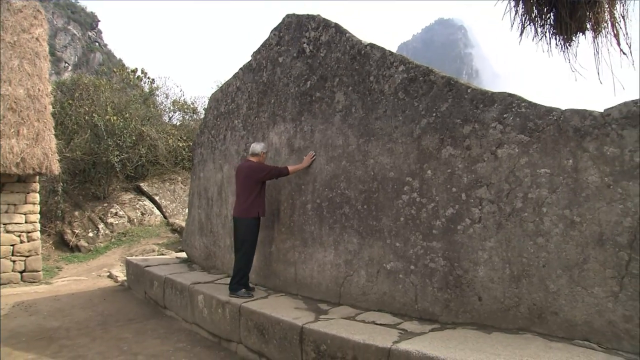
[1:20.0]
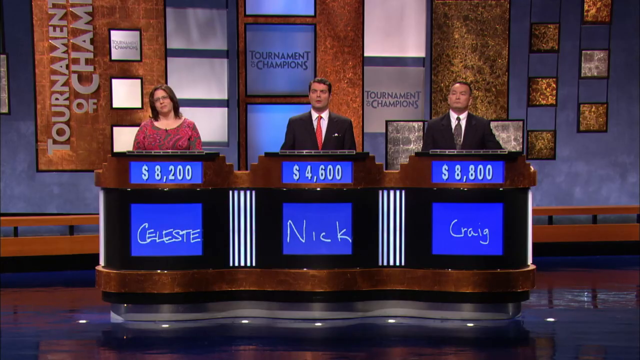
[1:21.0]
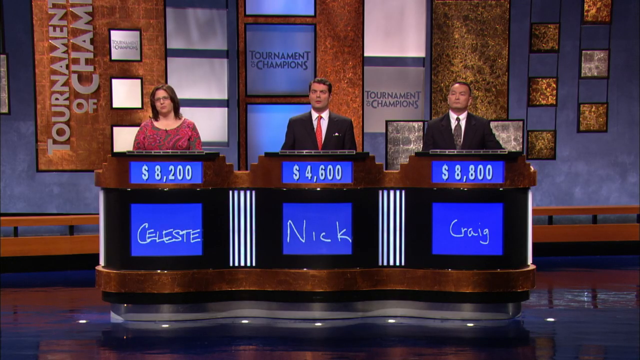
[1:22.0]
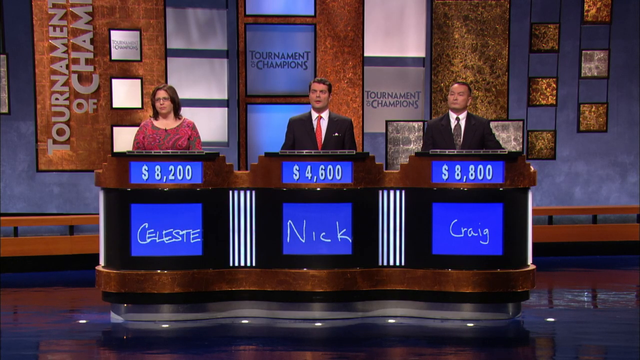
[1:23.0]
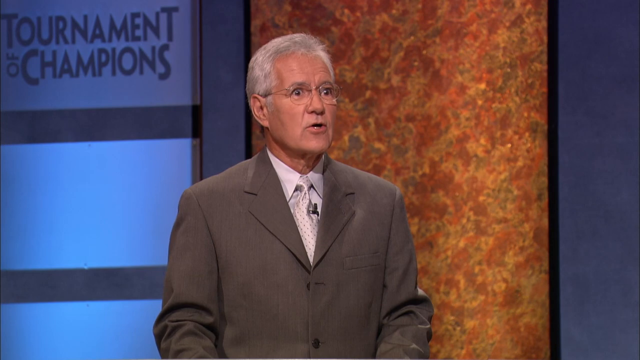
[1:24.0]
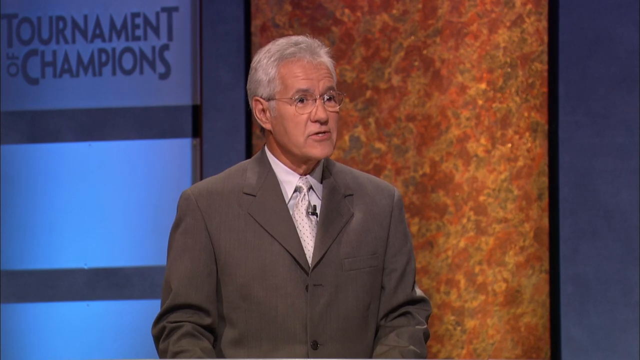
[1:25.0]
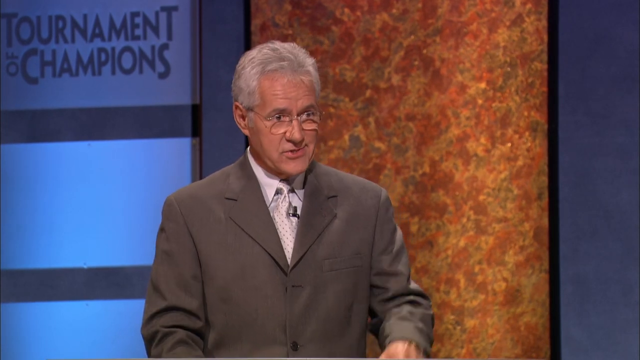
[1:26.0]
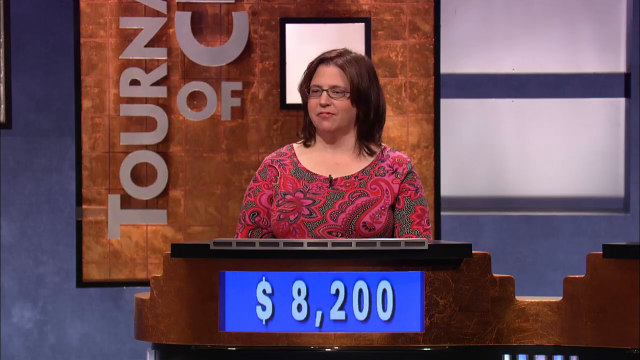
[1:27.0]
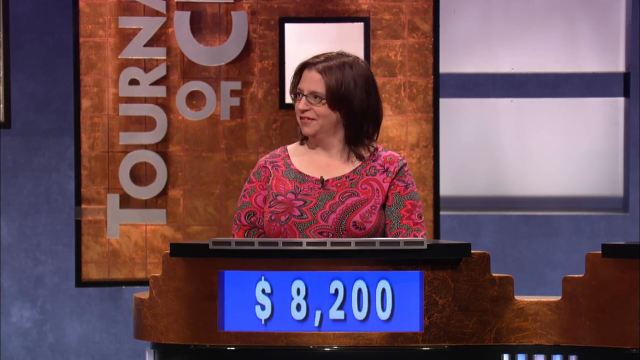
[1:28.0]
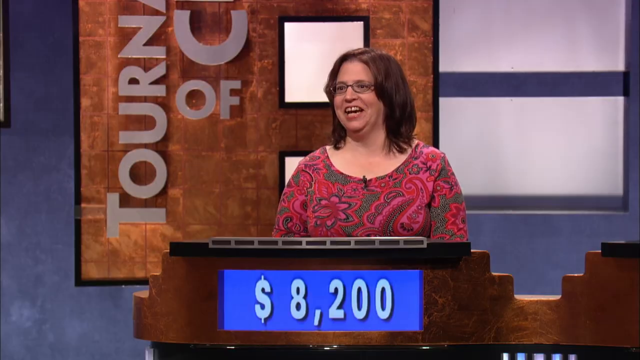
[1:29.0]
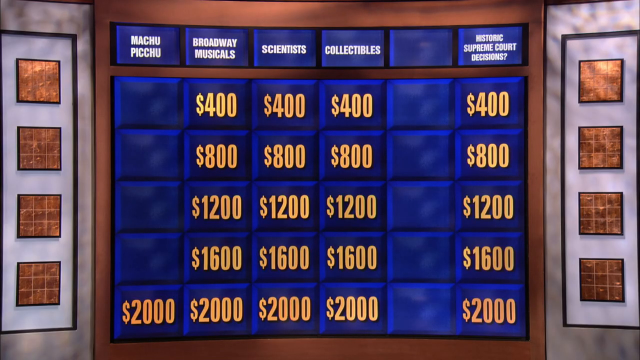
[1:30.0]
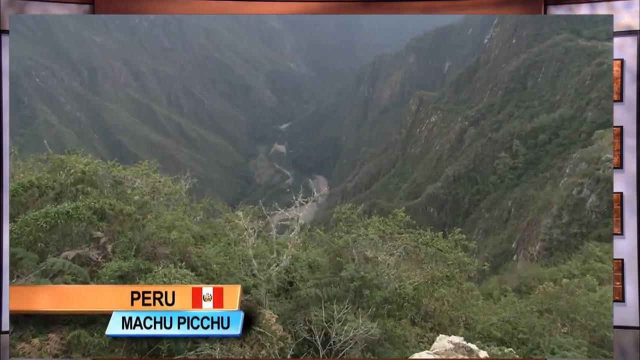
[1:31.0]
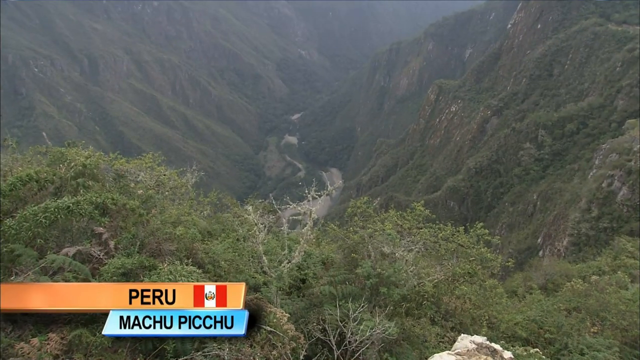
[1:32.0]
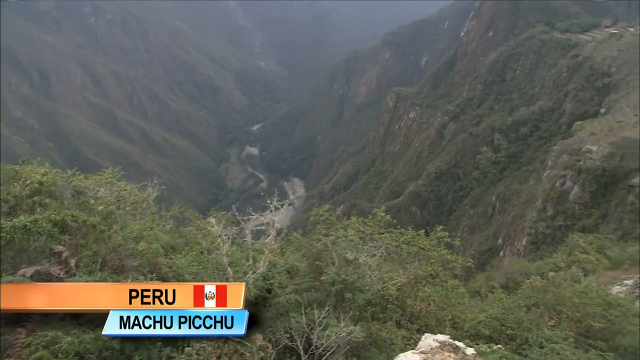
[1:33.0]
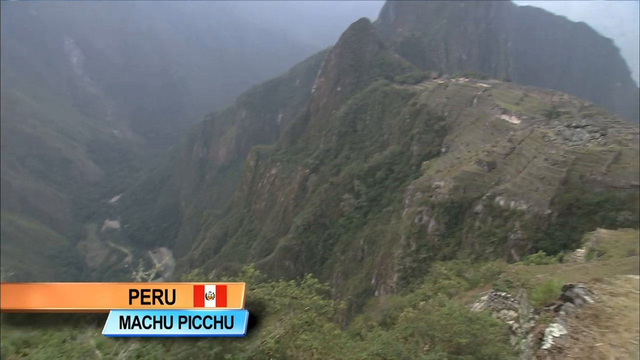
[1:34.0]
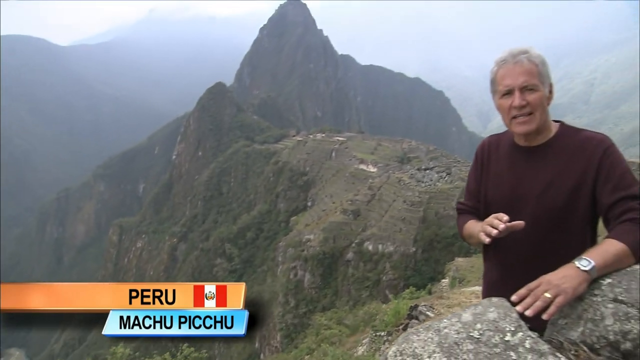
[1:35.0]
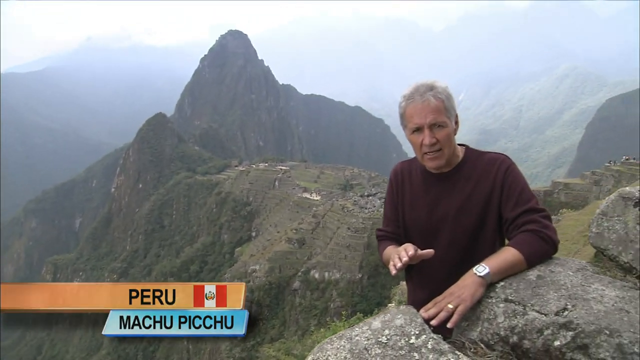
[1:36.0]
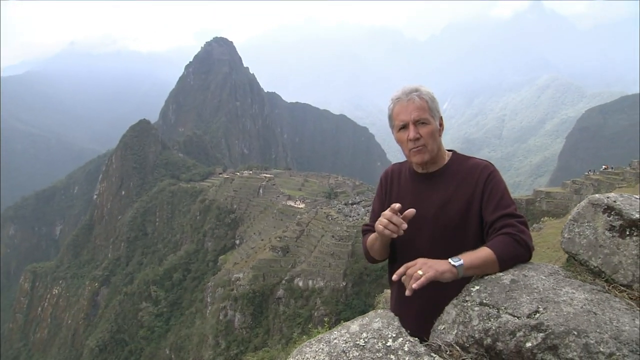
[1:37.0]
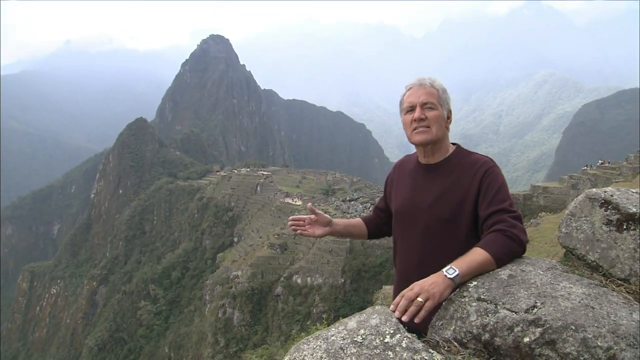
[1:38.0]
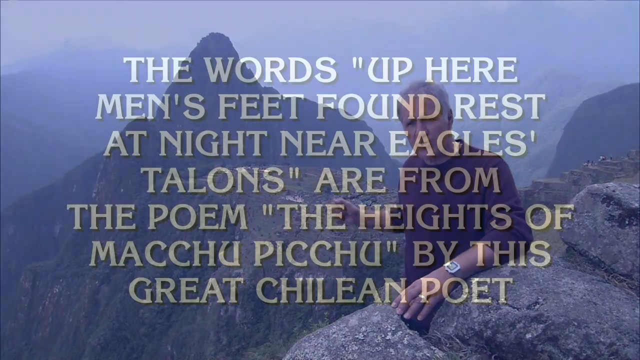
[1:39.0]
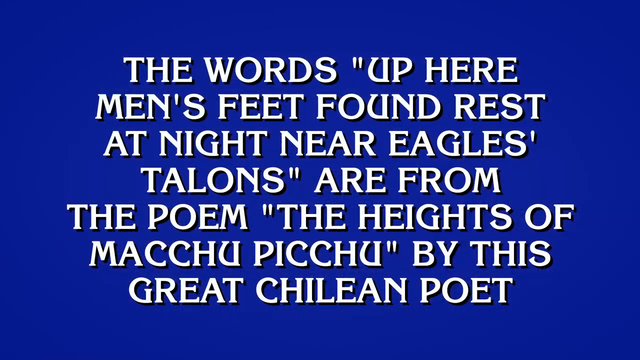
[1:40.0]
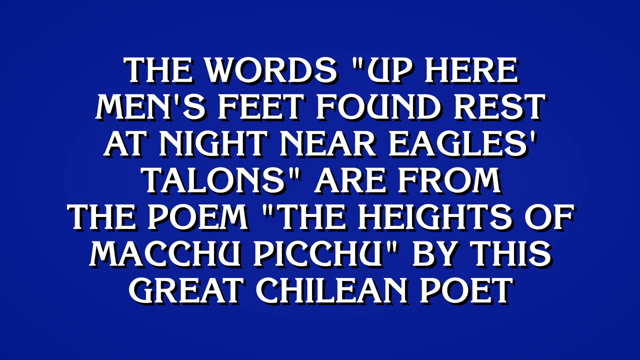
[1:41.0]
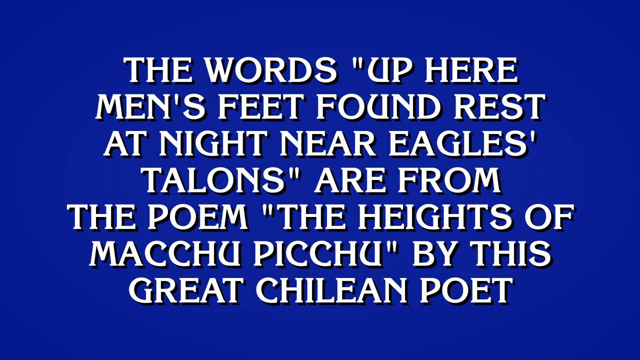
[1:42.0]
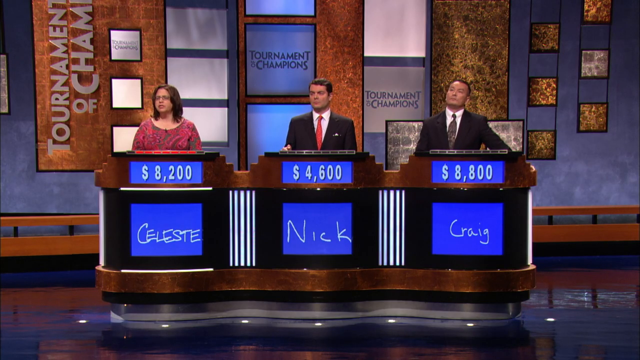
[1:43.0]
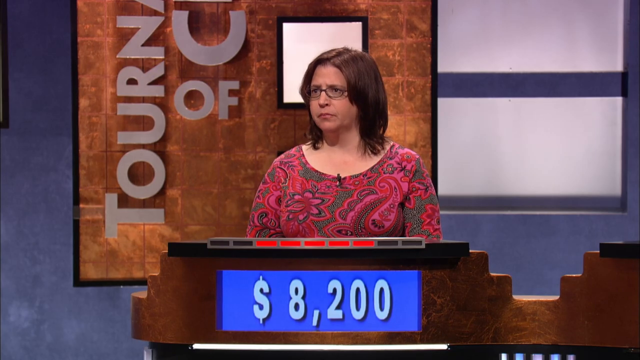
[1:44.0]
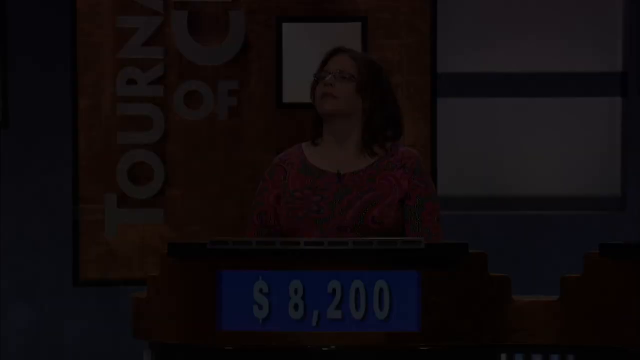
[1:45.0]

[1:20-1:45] Alex Trebek has his hands lightly pressed against the wall, with one shoe kind of cockeyed at roughly a 45-degree angle; his left leg is a bit further up and his right leg is staggered. He is standing on some stones: starting on the left, basically flush with the wall his hands are on, there are about eight stones, plus some fractures on top and a little moisture. To his left, past the step, there is a dirt trail that apparently goes around and down. Nobody seems to know the answer; the contestants shake their heads, and he gives the answer. Play goes back to the woman, who picks the last clue in the category, worth $2,000. Trebek stands with his arm up and his elbow resting on the rock, and points with his right hand down to the area at the bottom where the people were. The woman, at 8,200, gives an answer, but whether it is right is not shown; she looks like she does not know, with her head tilted back, and then the picture fades away.